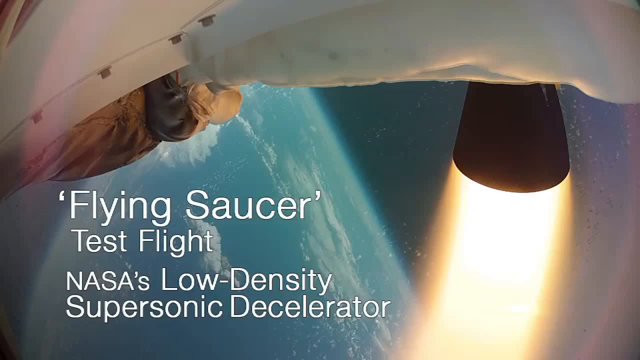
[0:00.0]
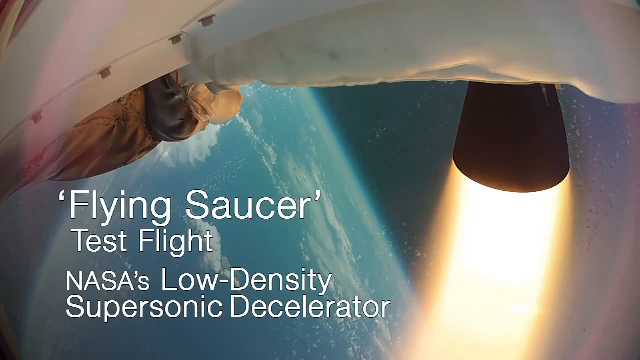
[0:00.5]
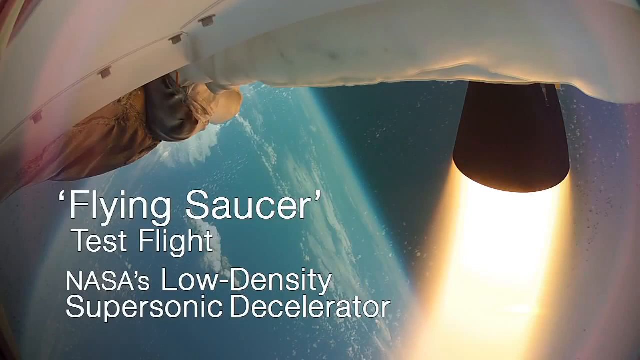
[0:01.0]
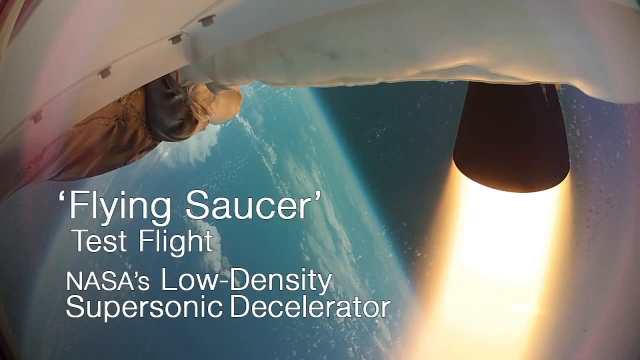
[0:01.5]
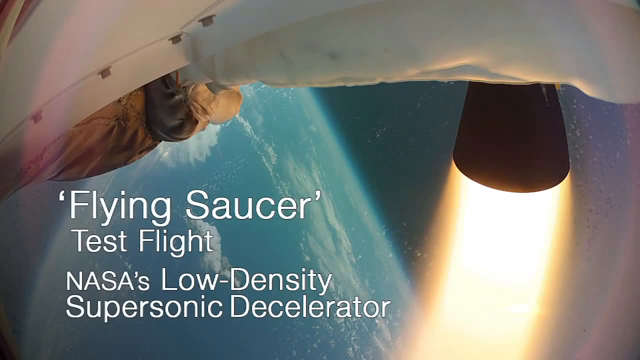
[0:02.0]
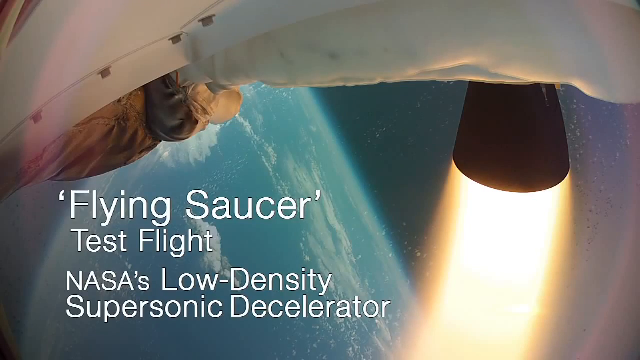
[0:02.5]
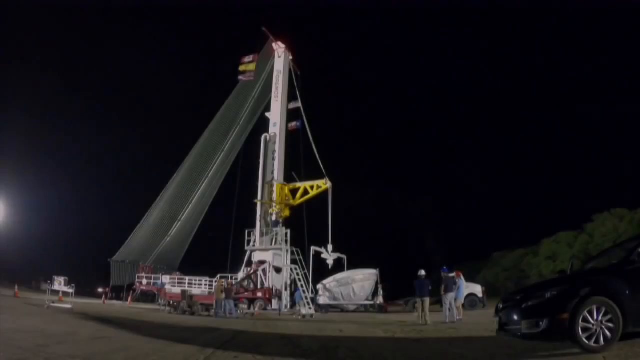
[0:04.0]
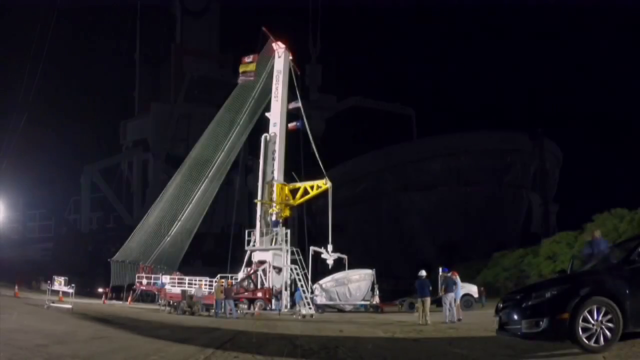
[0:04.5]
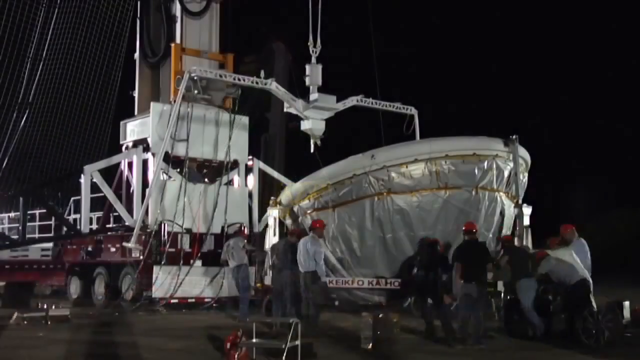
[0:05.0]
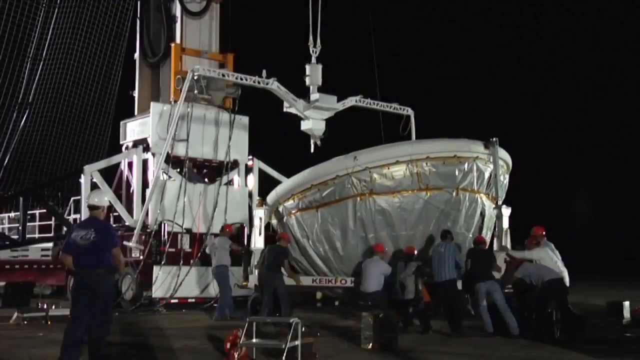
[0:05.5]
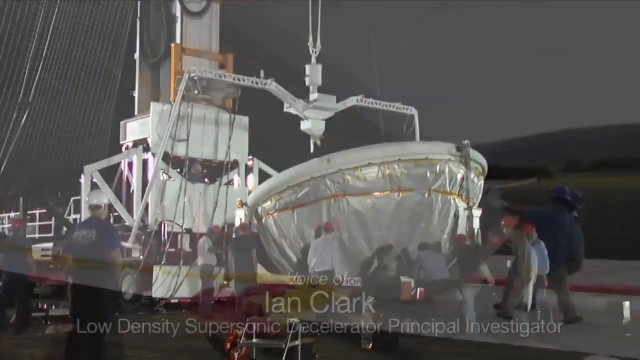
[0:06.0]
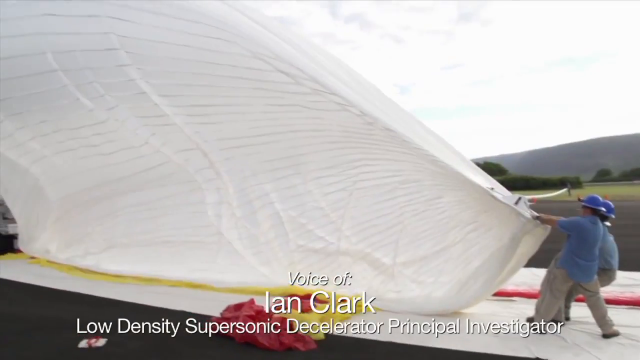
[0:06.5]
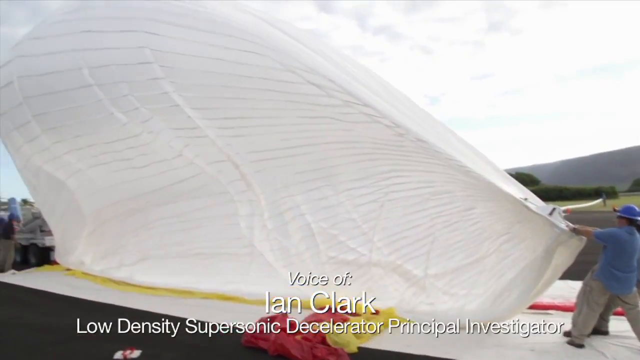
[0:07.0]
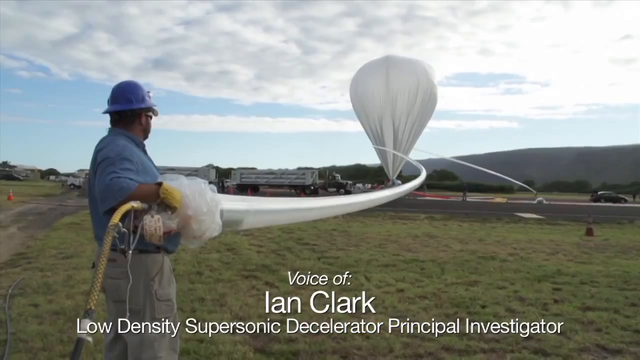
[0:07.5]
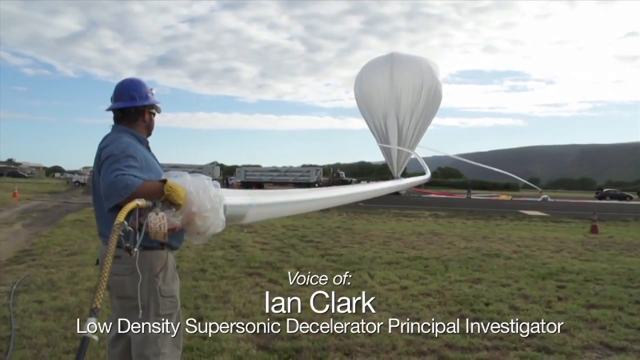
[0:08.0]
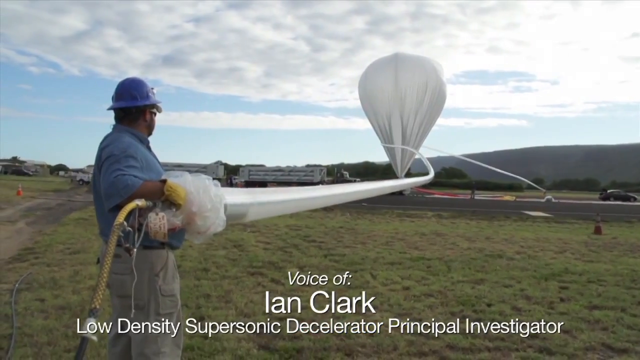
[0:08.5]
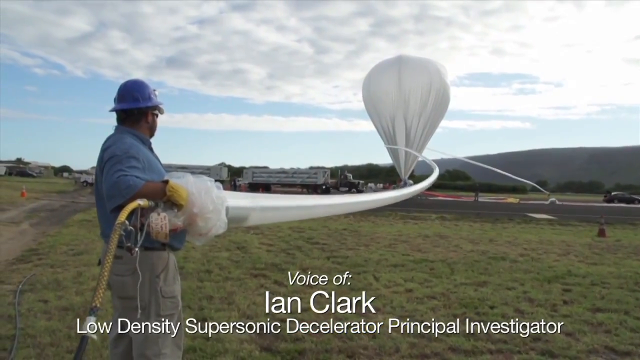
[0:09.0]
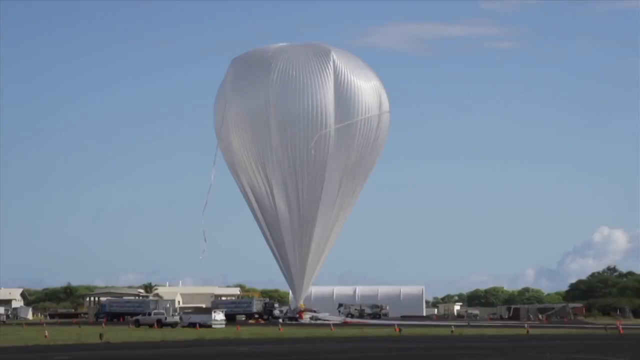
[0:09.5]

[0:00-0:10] The video opens with a view from a spaceship, behind a thruster. The thruster is on the right side of the image, white parts of the spaceship are at the top, and in the background are the Earth with some clouds down on it and space, visible kind of behind the thruster. Text on the screen reads "Flying Saucer Test Flight, NASA's Low Density Supersonic Decelerator." The image fades to black, and a nighttime video shows the spaceship being built. Large metal machinery goes up into the sky, the sky is black, and the ground and all the machinery in the area are very well lit. Some people are on the ground, and a big part of the spaceship is pushed closer to the machinery by a group of men in hard hats. Next, something like a white hot air balloon is attached to the ground in a large field; the people seem to be testing, or maybe building parts of the parachute on the spaceship. A man holds something like a rope attached to the white balloon, which floats up but stays tethered to the ground. A layer of clouds is in the sky, and text at the bottom of the video reads "Voice of Ian Clark, Low Density Supersonic Decelerator Principal Investigator."